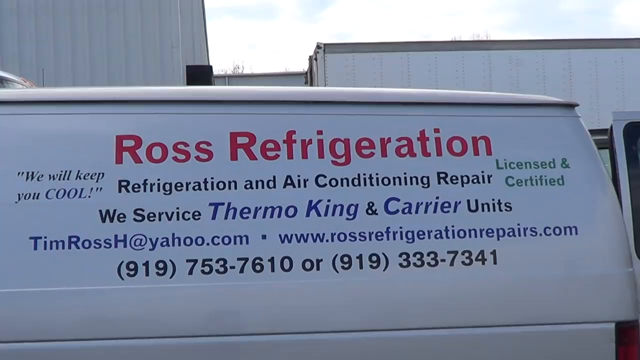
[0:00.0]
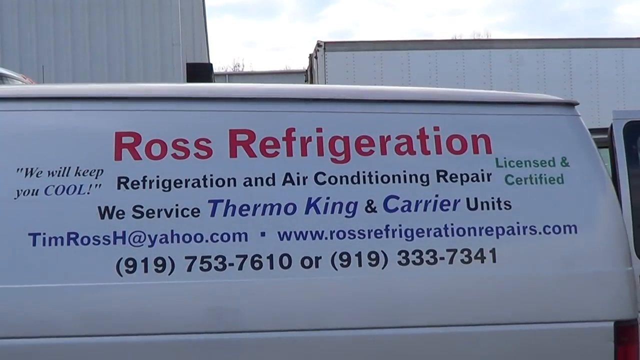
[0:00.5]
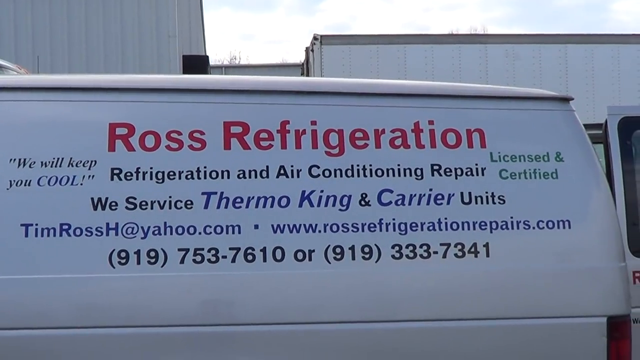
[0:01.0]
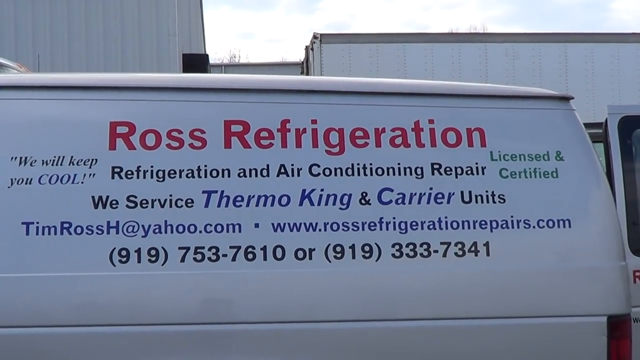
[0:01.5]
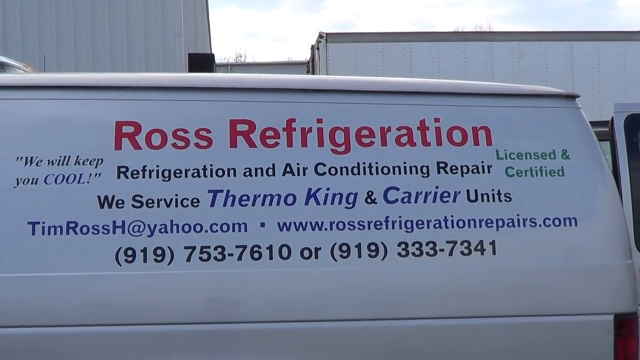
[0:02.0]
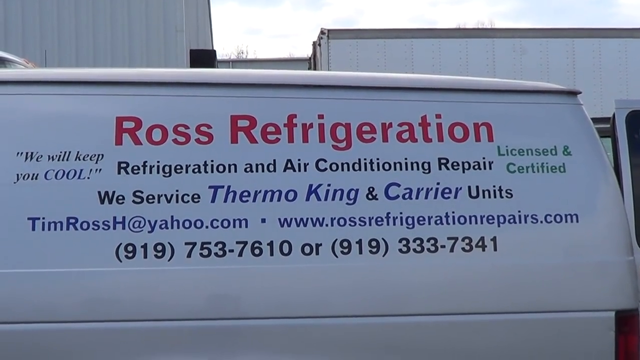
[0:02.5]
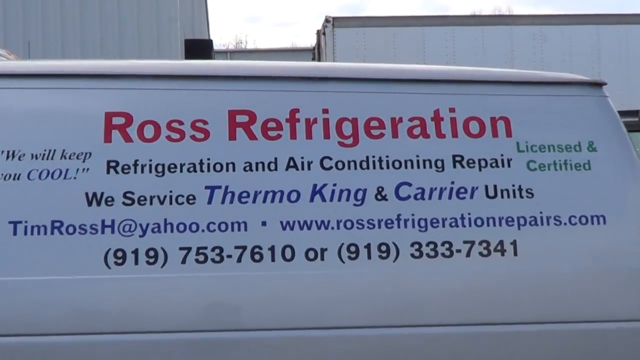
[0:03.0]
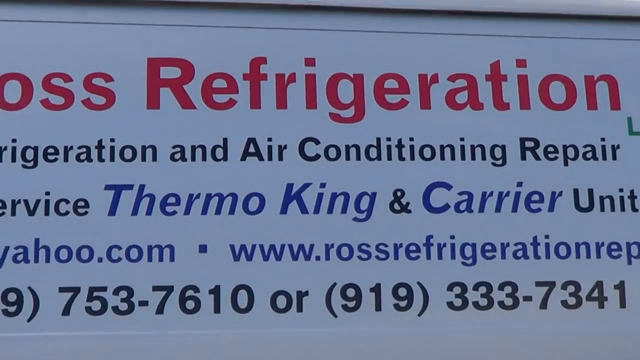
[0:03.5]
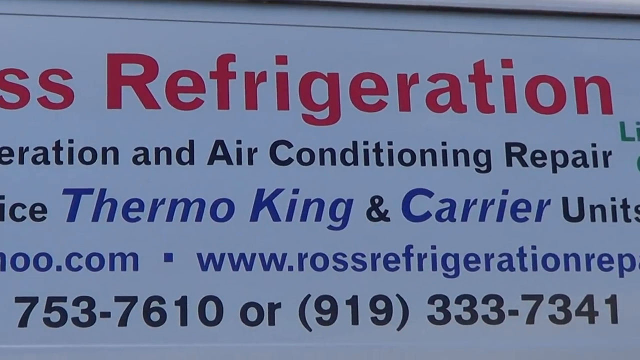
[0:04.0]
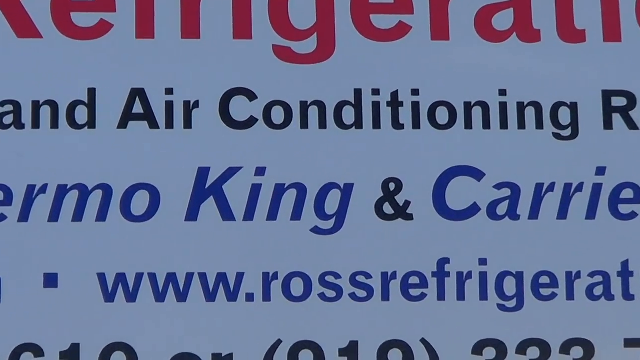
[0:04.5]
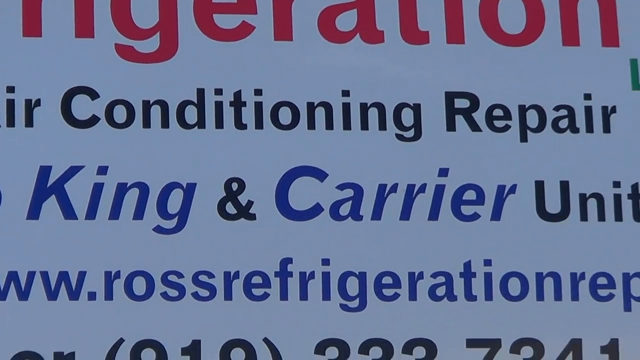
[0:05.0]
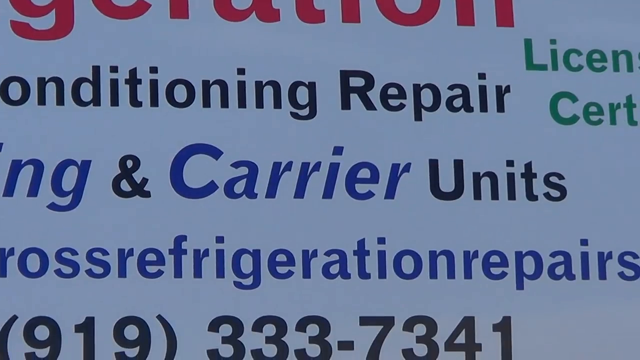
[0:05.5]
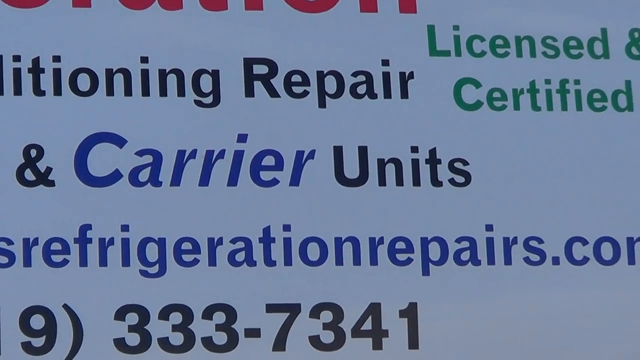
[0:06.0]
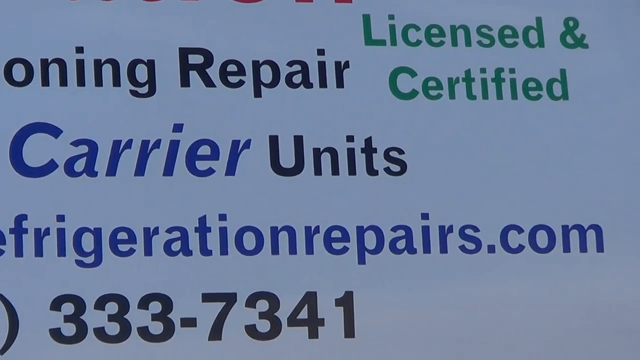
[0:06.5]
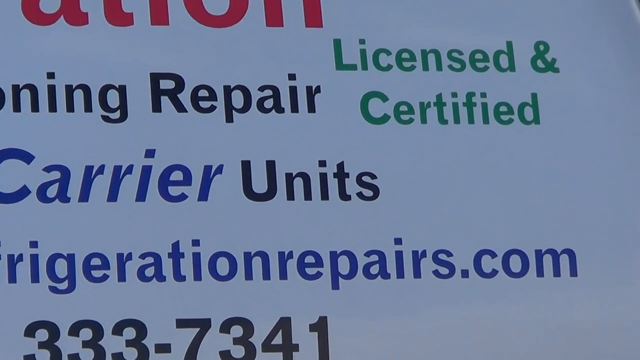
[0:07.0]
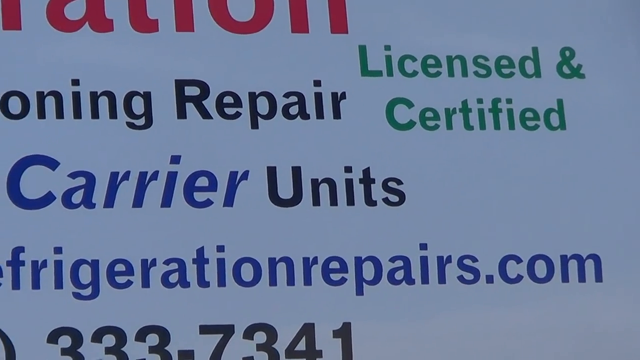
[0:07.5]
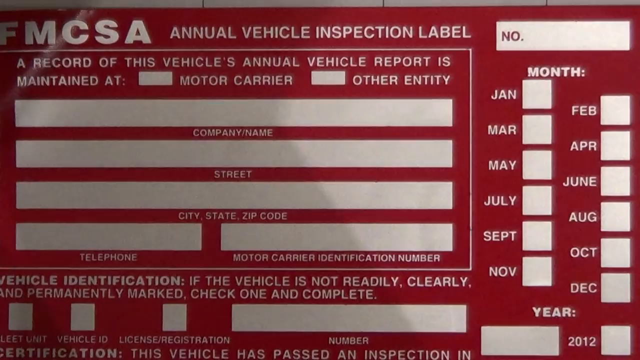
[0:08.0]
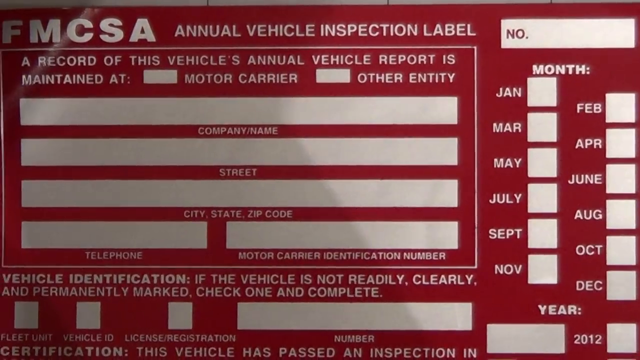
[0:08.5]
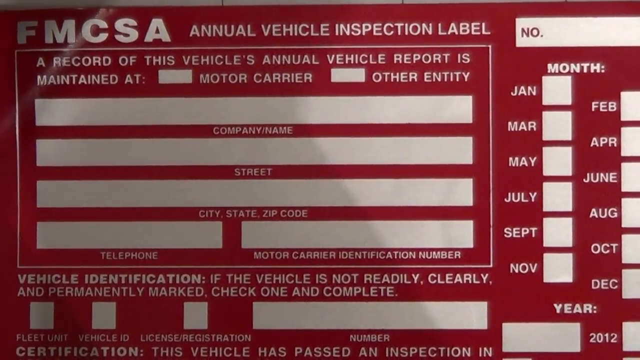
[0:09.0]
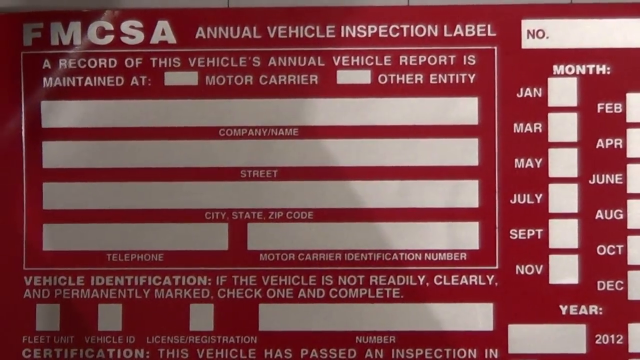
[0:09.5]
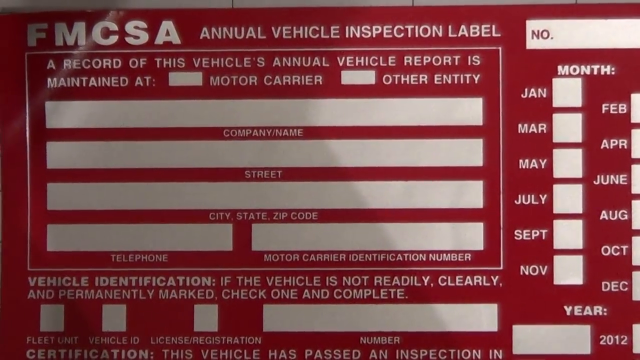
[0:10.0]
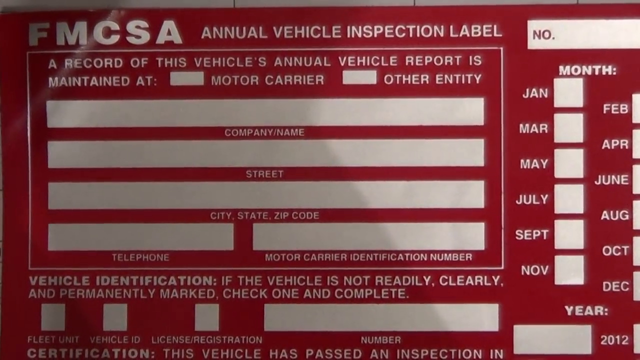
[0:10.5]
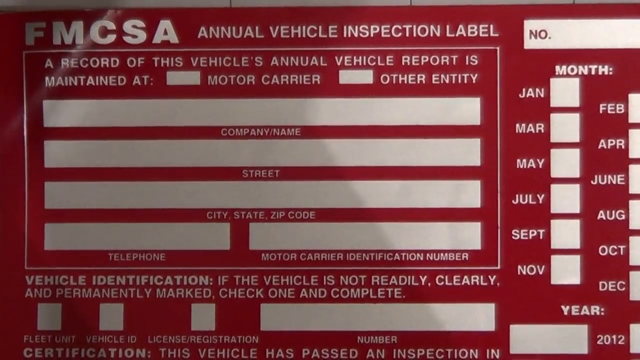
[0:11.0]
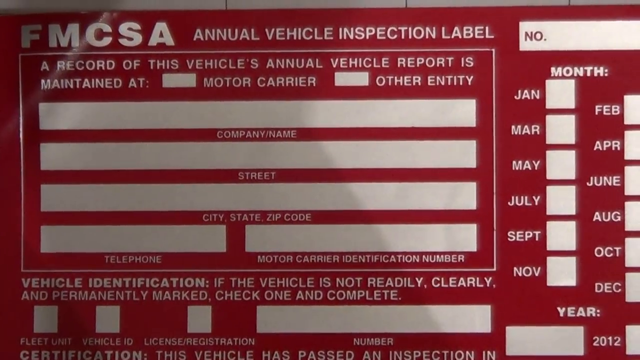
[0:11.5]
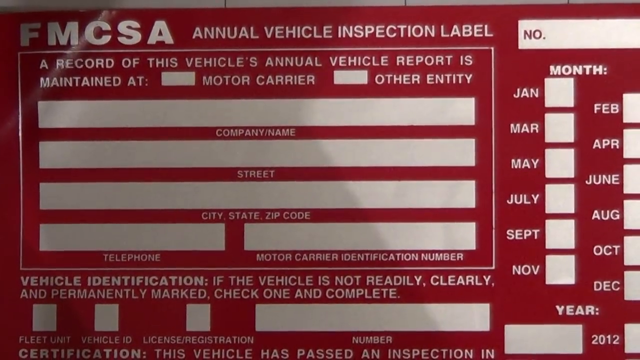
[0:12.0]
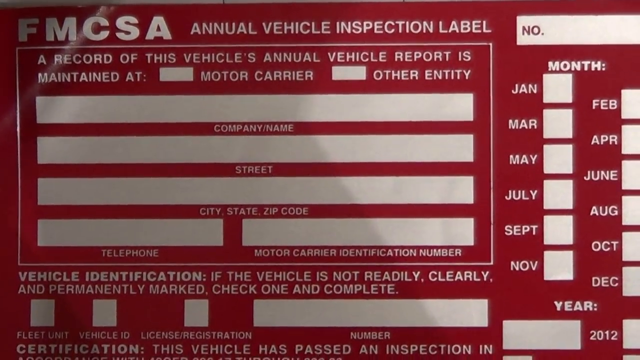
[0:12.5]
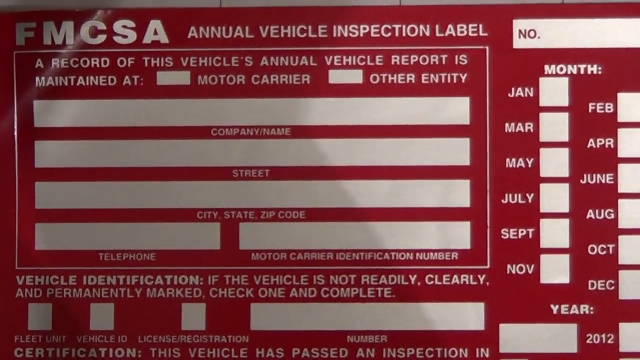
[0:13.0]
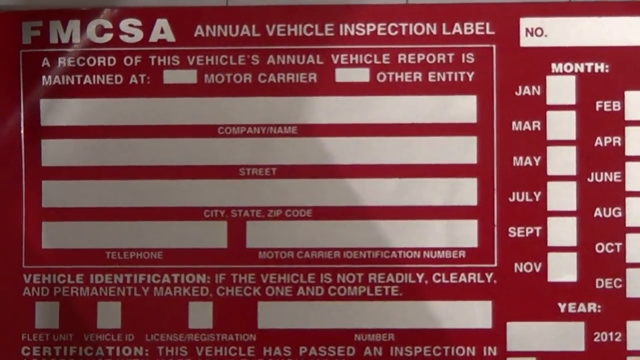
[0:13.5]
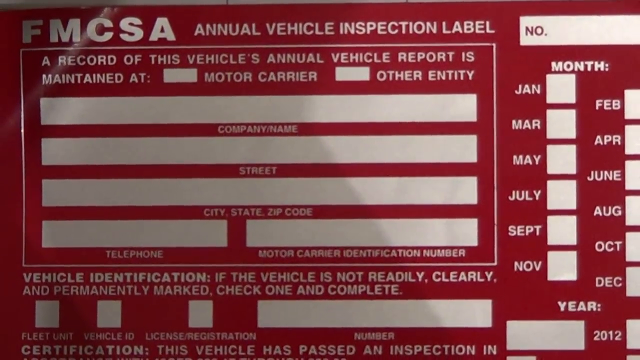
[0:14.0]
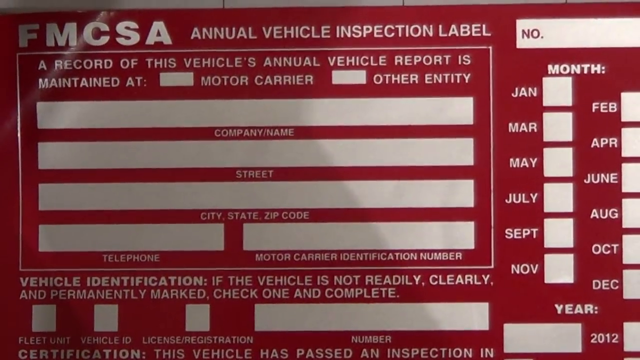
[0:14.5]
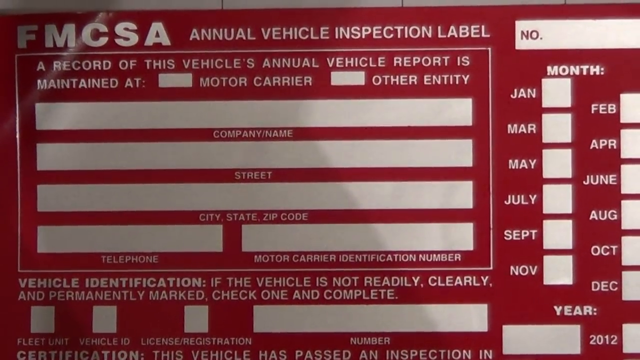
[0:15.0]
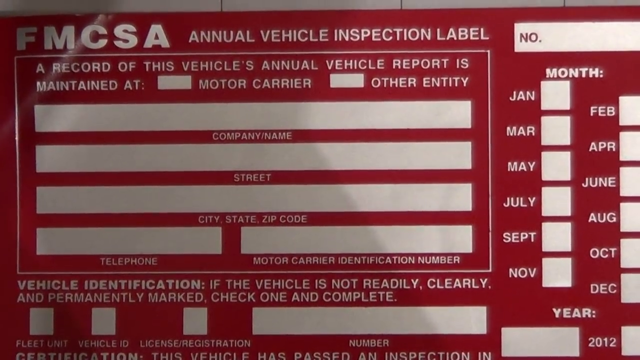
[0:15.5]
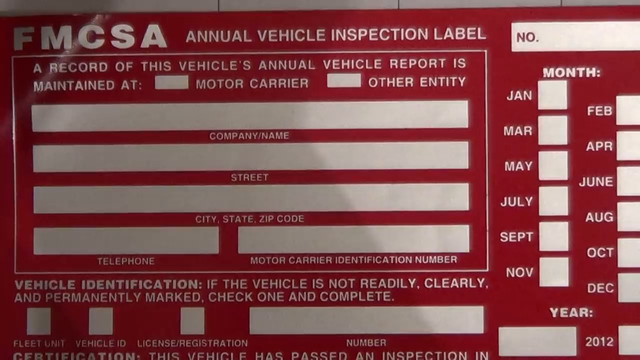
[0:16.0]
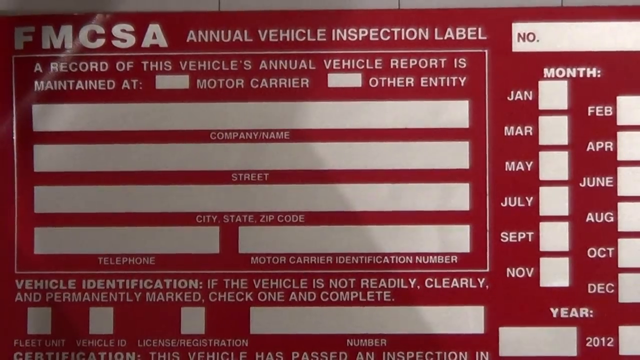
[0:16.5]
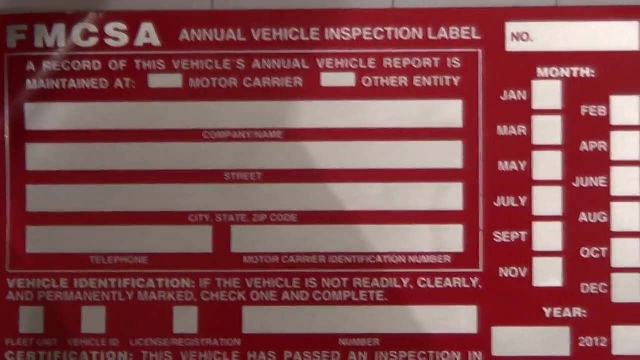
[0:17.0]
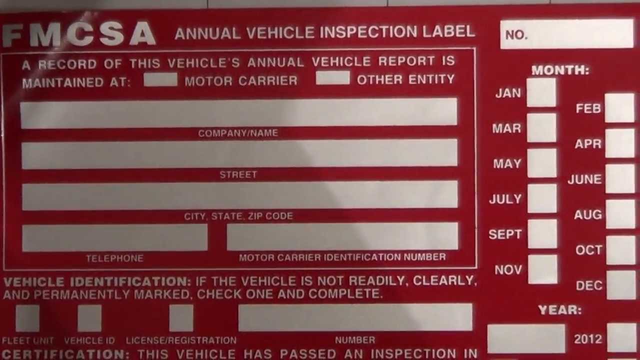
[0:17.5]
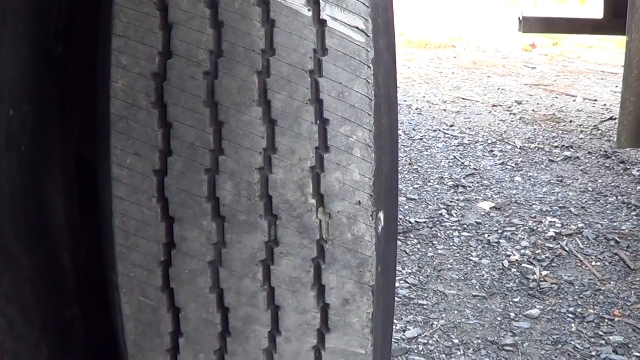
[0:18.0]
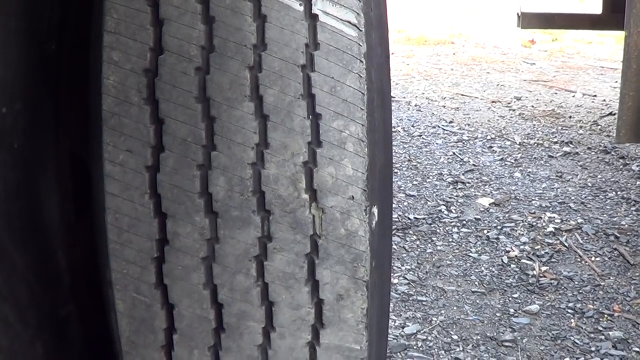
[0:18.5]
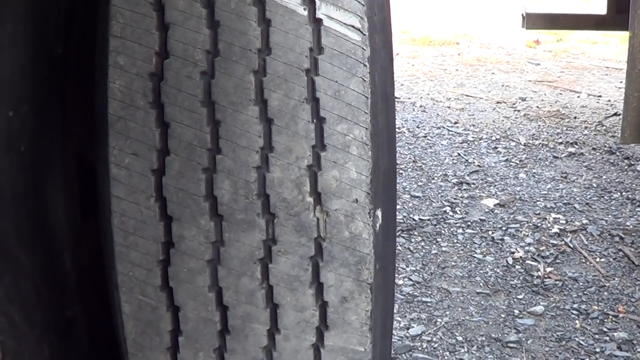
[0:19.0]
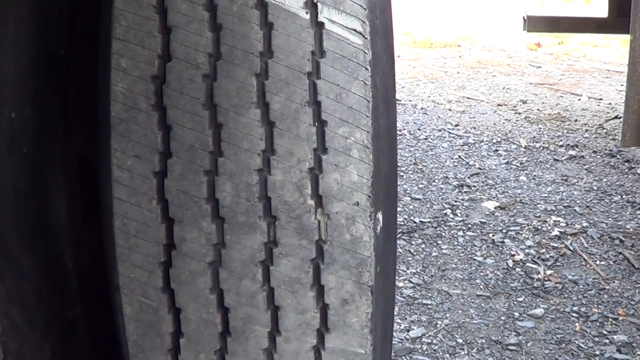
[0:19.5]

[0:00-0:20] The video opens on the side of a van, where big red letters read "Ross Refrigeration" among a lot of other text: a phone number with a 919 area code, a website address, an email address, and text reading "refrigeration and air conditioning repair." The camera zooms in really close on the side of the van, so close that only one or two words of text are visible at a time. More text in green letters reads "licensed and certified." Next comes a label reading "annual vehicle inspection label," with "FMCSA" in the upper left. The label has a red background with many fields to fill out, and the write-in areas are white. The fields ask for company name, street, city, state, zip code and telephone number. On the right side are two columns of checkboxes: the left column lists January, March, May, July, September and November, the right column lists the other months of the year, and below the right column is the year 2012.